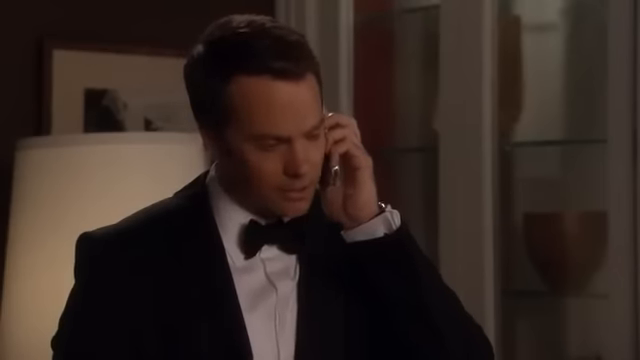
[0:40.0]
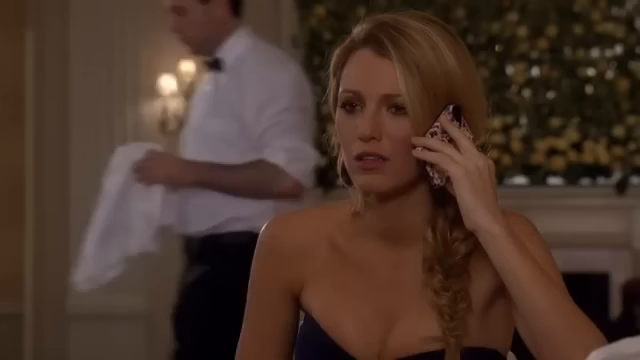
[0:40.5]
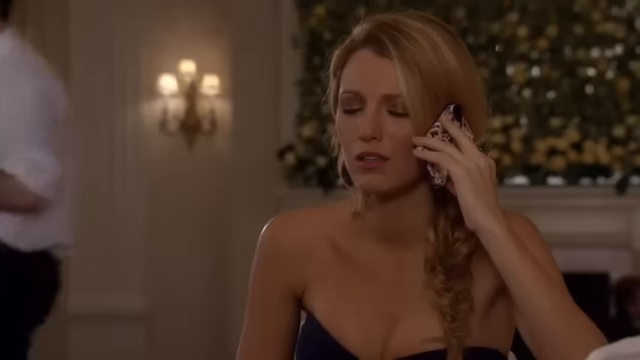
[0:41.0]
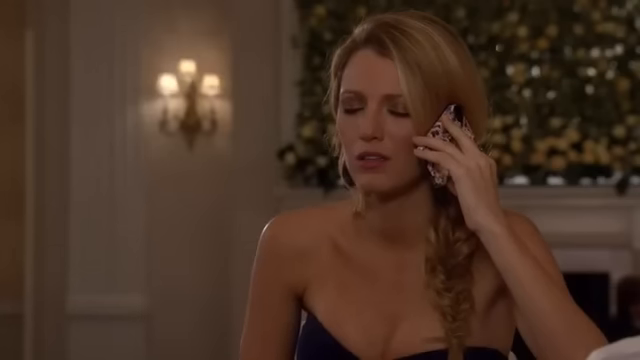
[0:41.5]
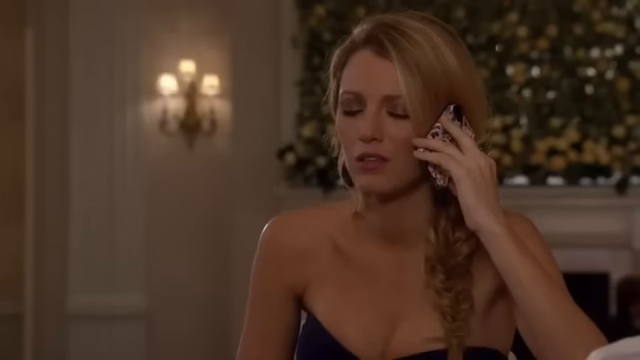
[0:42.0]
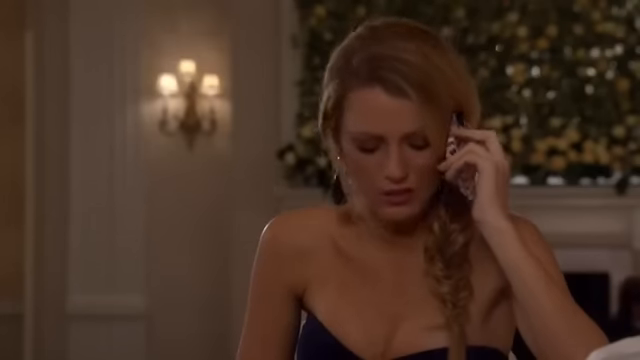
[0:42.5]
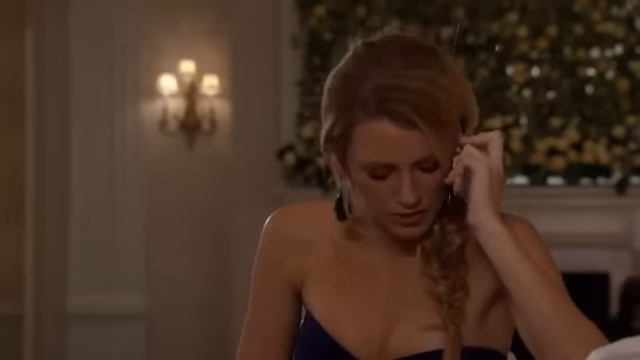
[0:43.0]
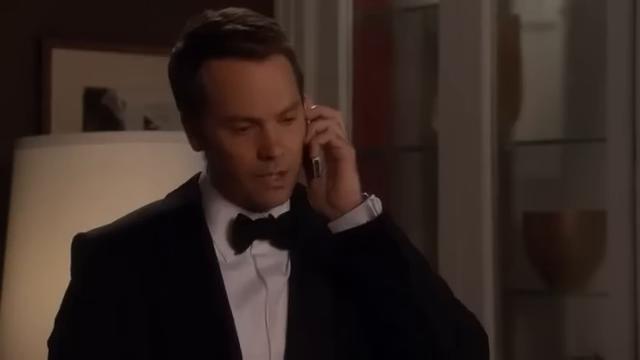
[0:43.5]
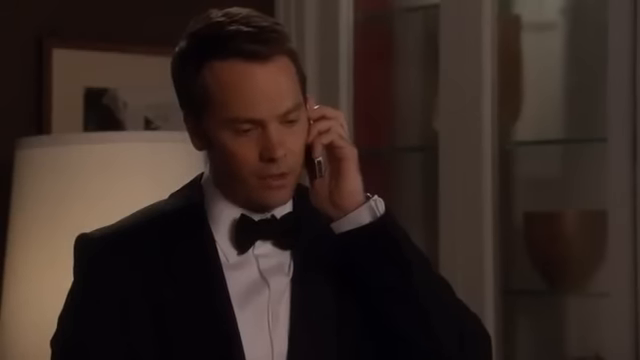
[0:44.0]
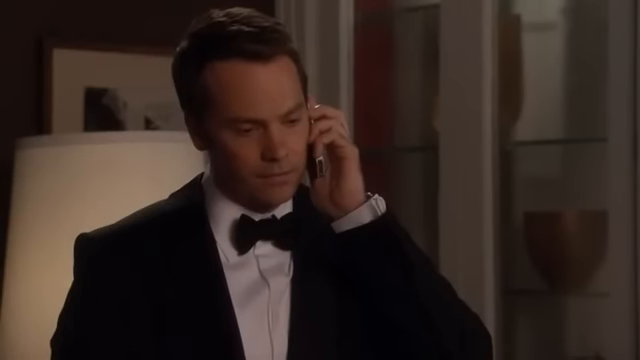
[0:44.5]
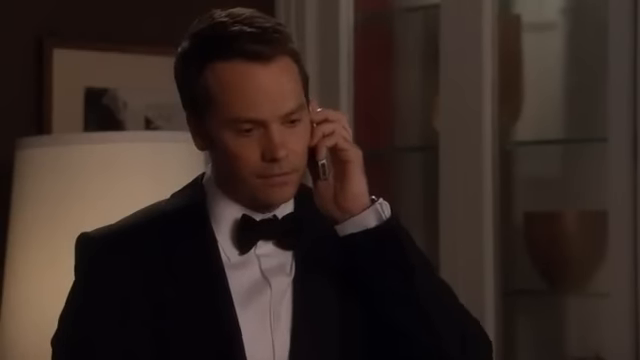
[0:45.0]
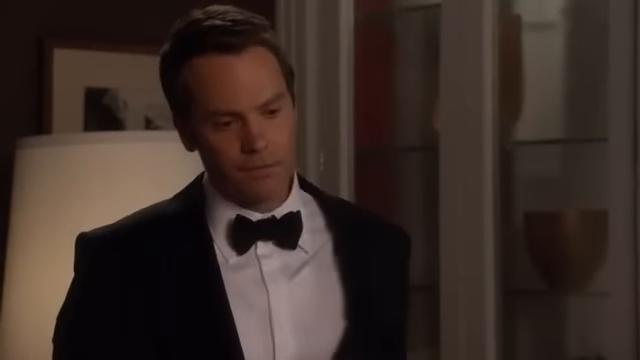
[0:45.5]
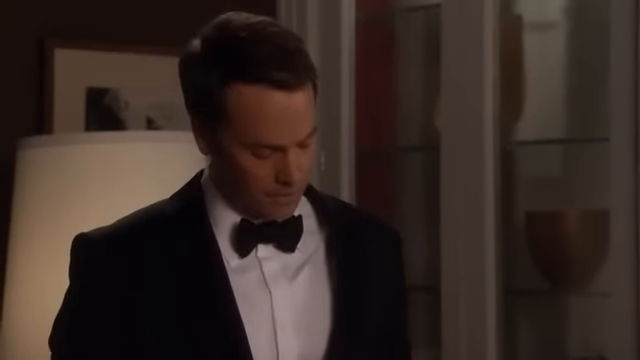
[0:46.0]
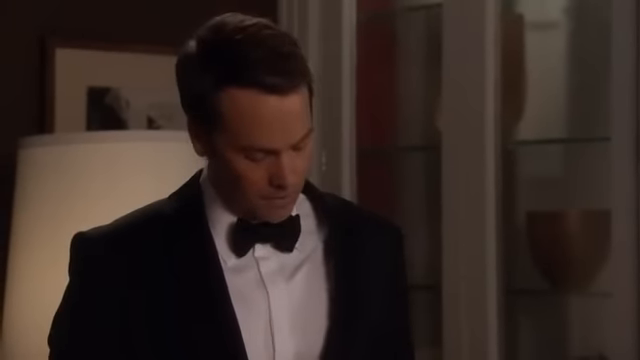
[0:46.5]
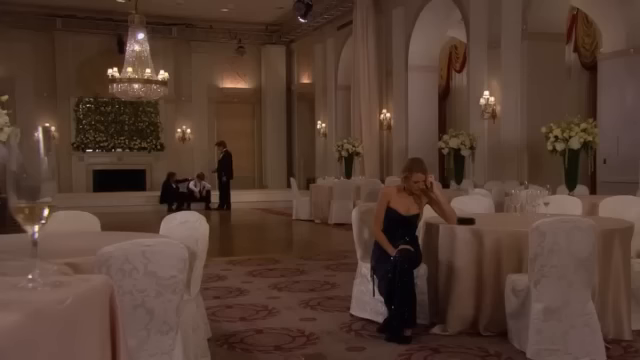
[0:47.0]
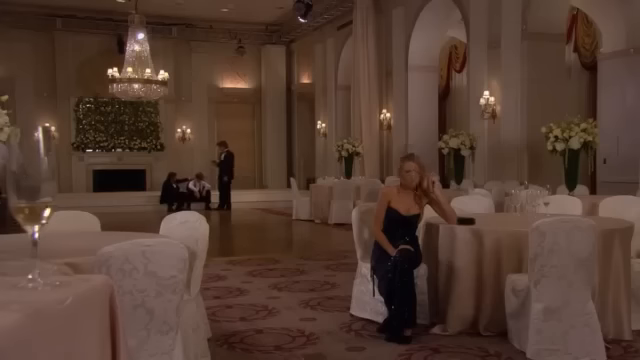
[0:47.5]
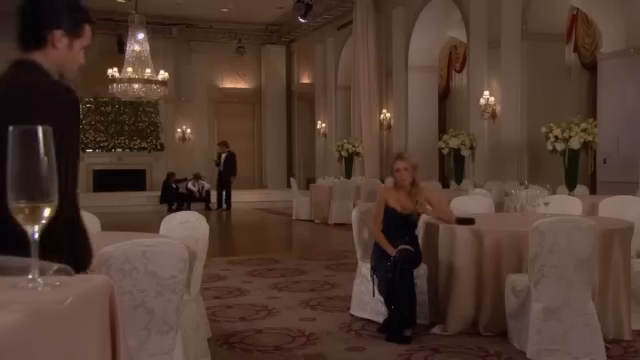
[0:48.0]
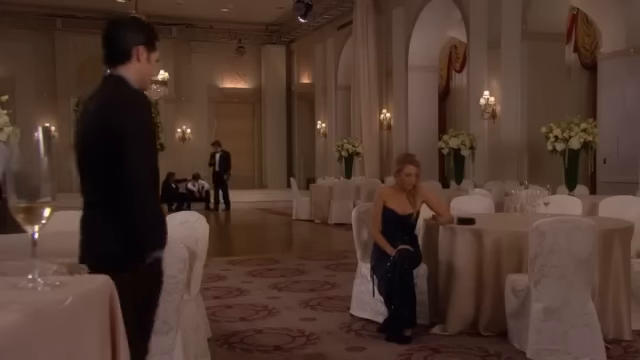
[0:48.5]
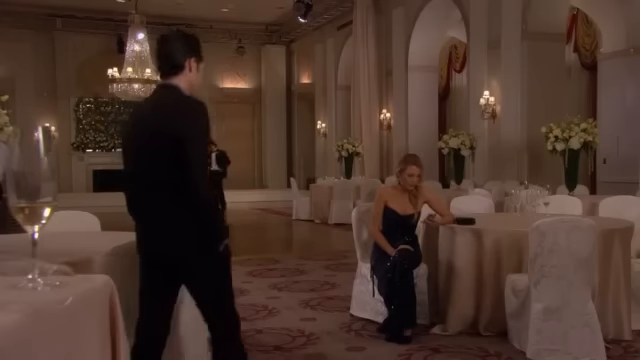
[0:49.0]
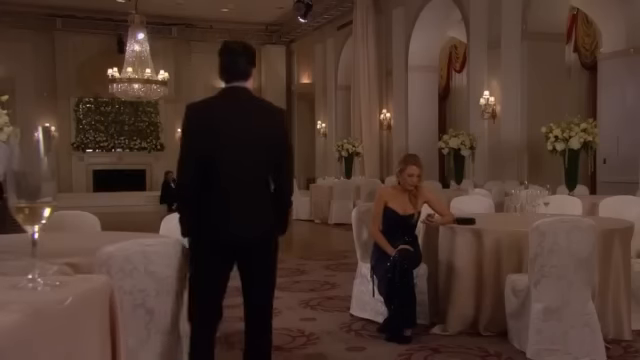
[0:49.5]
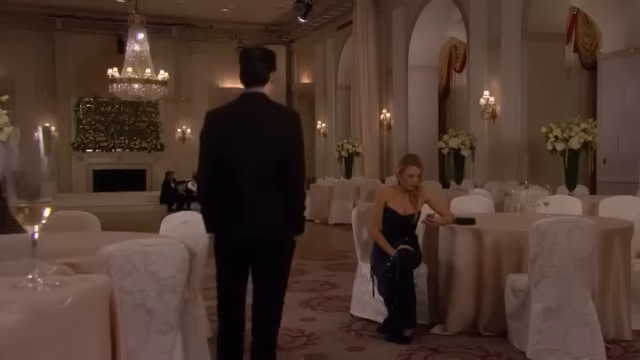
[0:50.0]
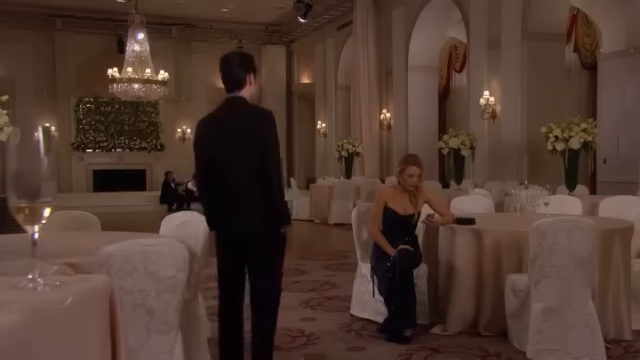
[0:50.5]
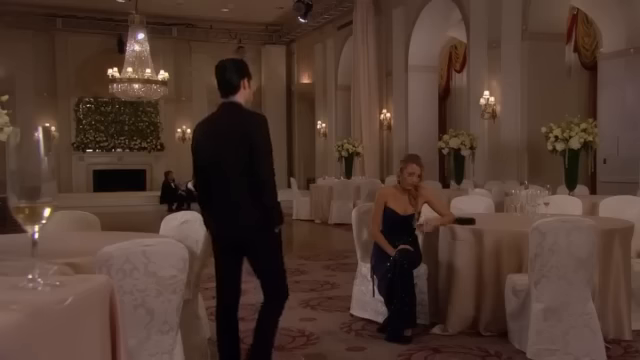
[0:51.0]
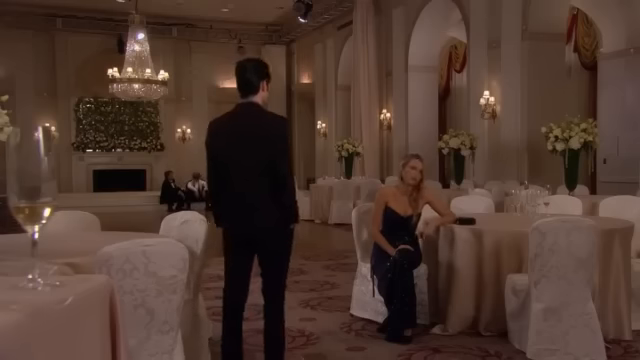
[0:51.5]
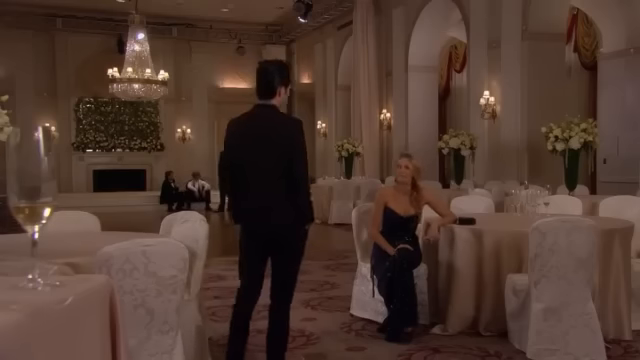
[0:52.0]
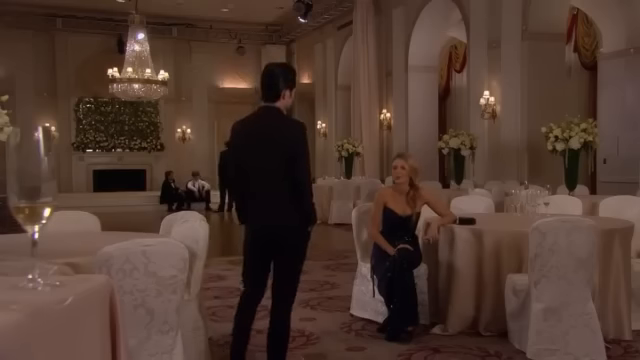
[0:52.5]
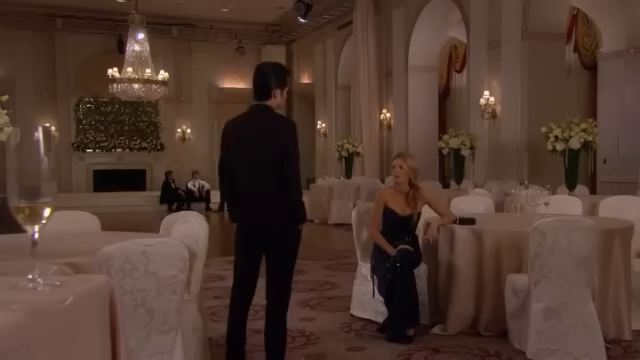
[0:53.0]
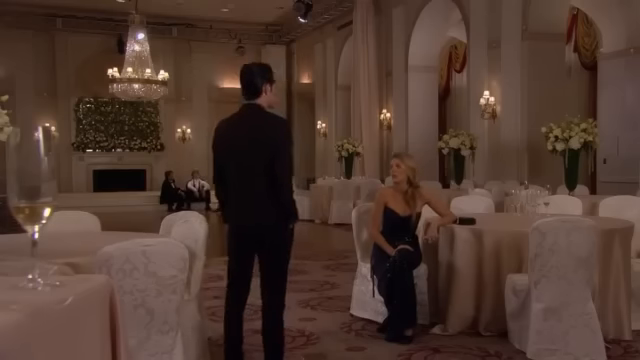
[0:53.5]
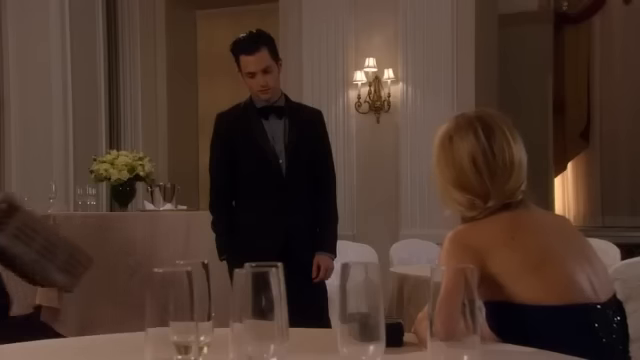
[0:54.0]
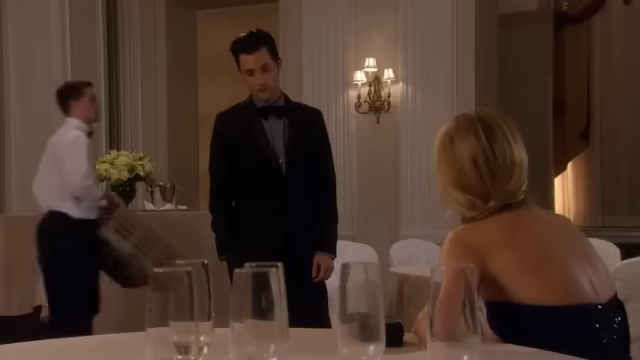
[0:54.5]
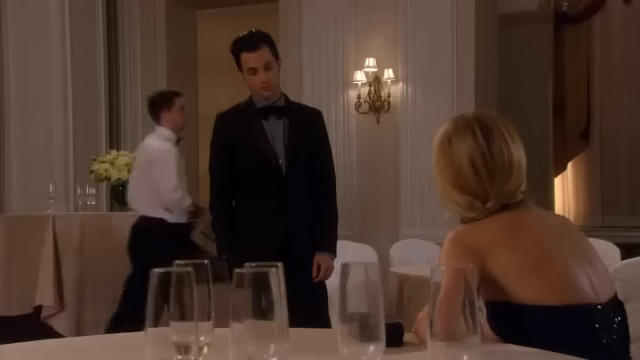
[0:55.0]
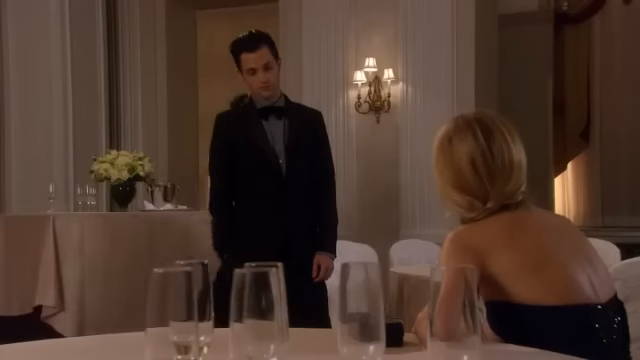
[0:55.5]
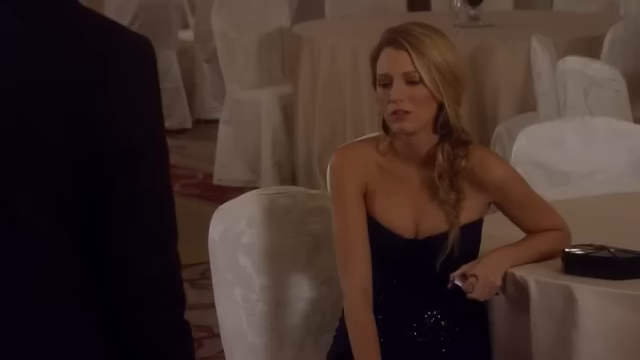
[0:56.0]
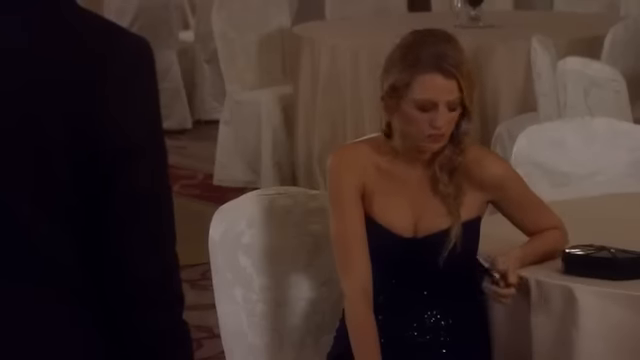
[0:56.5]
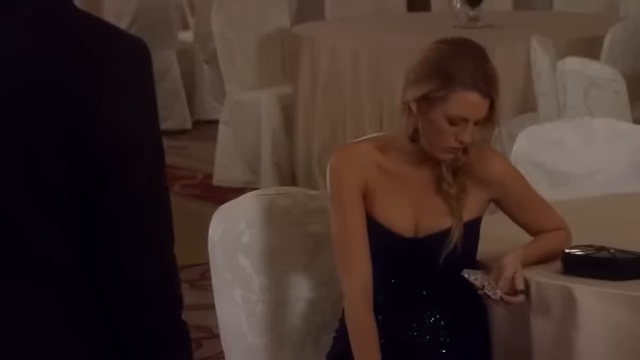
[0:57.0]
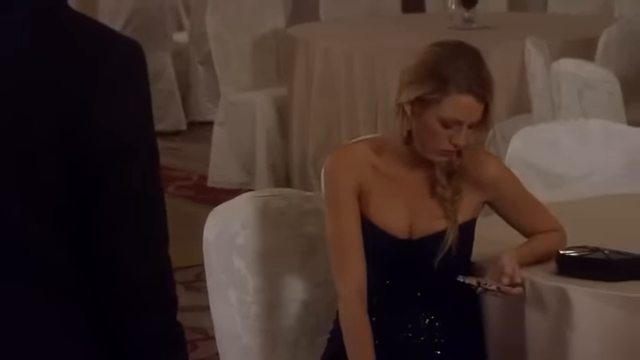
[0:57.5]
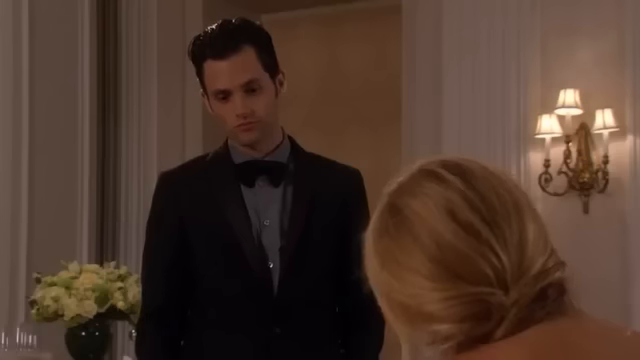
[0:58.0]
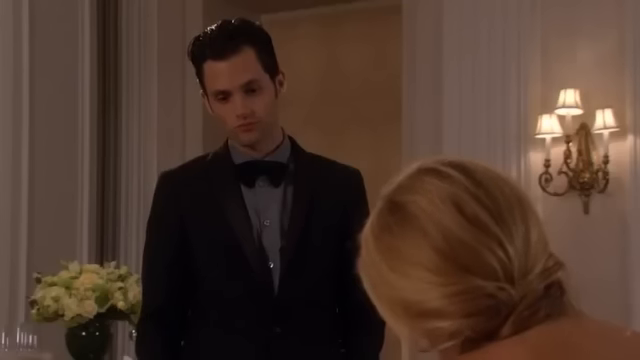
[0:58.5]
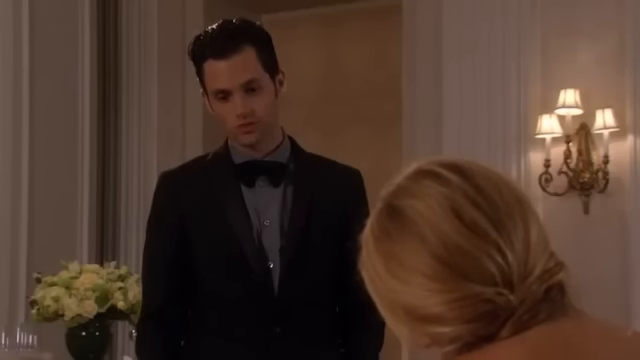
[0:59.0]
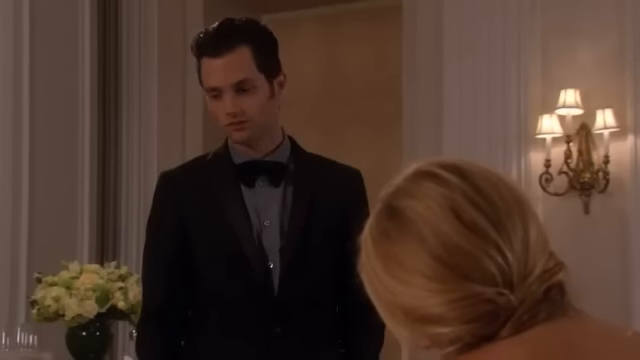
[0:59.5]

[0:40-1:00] A man in a tuxedo is in a hotel, holding a phone in his left hand and speaking to somebody. Behind him are a glass cabin and a lamp. He goes to a woman who sits on a chair in a hotel hall with many tables, all with covers, and chairs that also have covers. Many lamps are behind them, and there are flowers on the desks. The man and the woman speak; she wears a blue dress and holds a phone in her left hand, and her black purse is on the table. The man continues speaking.